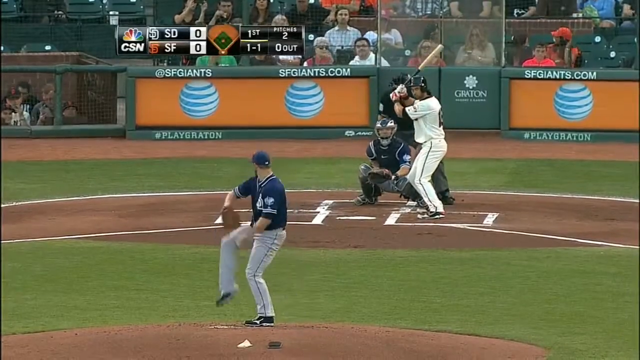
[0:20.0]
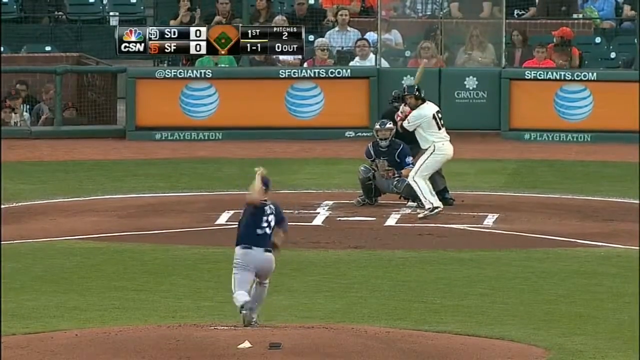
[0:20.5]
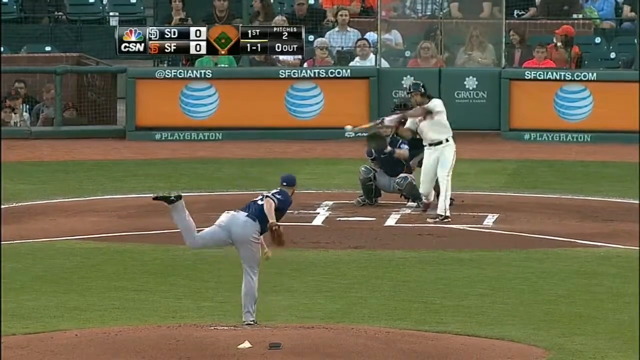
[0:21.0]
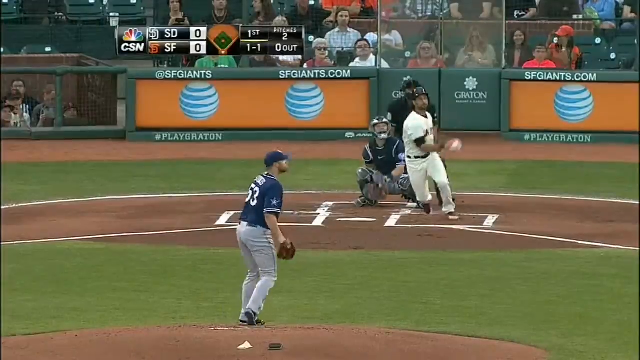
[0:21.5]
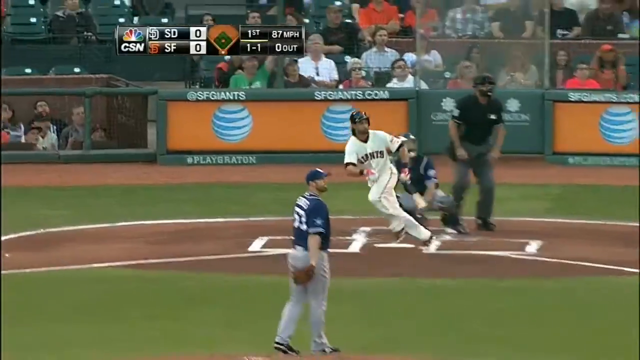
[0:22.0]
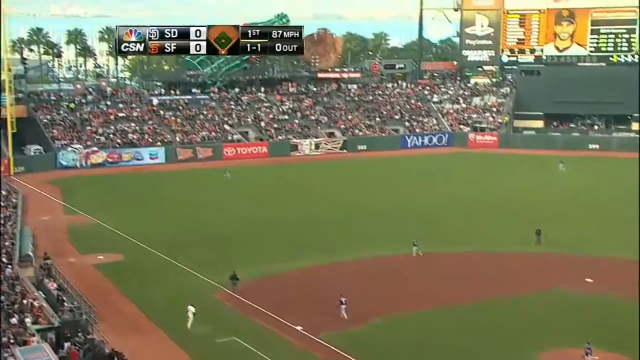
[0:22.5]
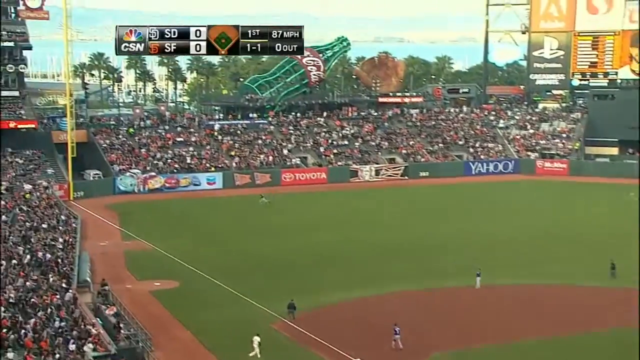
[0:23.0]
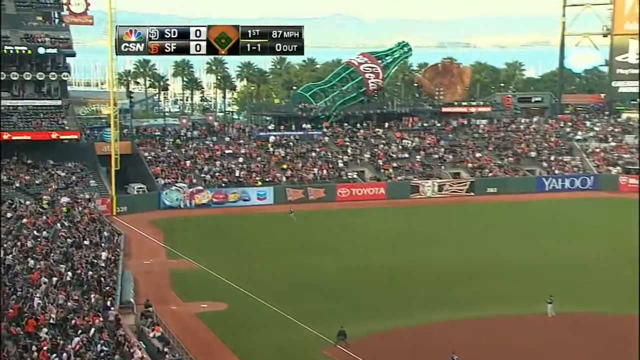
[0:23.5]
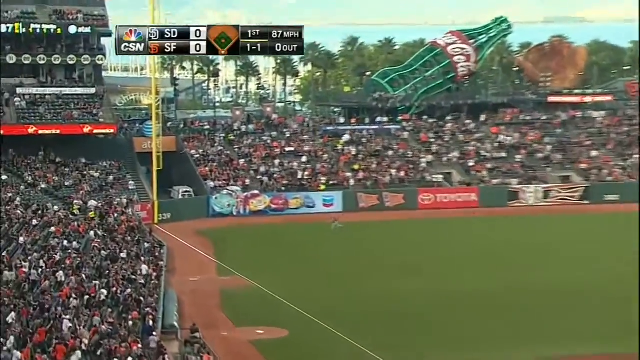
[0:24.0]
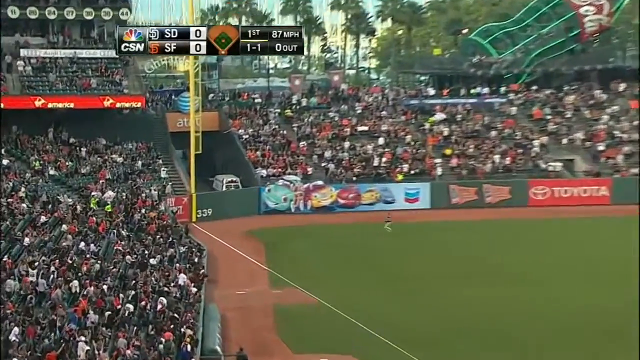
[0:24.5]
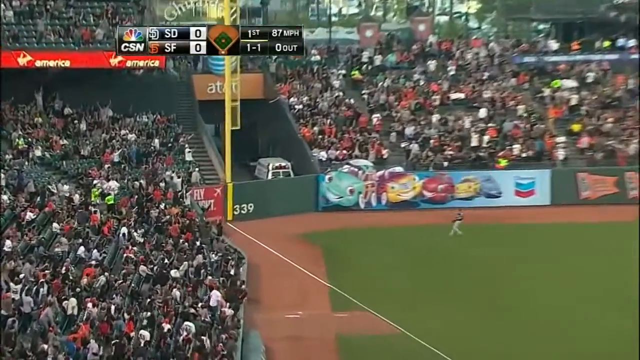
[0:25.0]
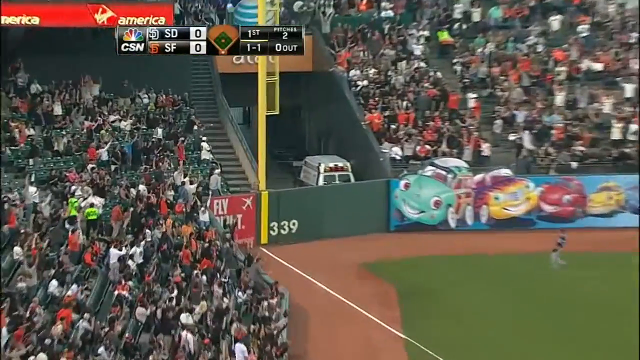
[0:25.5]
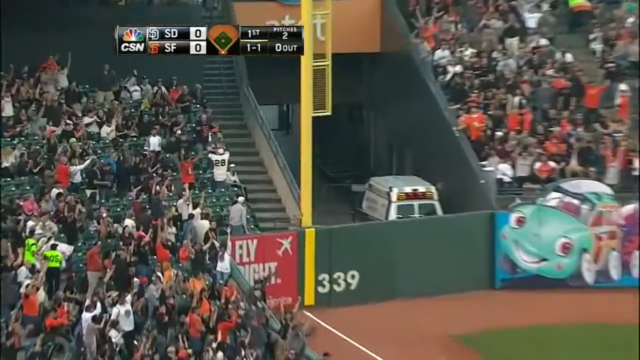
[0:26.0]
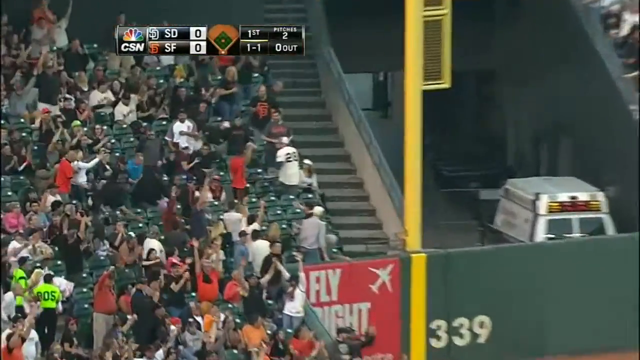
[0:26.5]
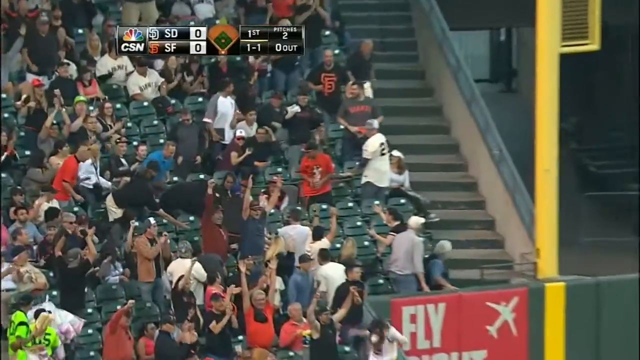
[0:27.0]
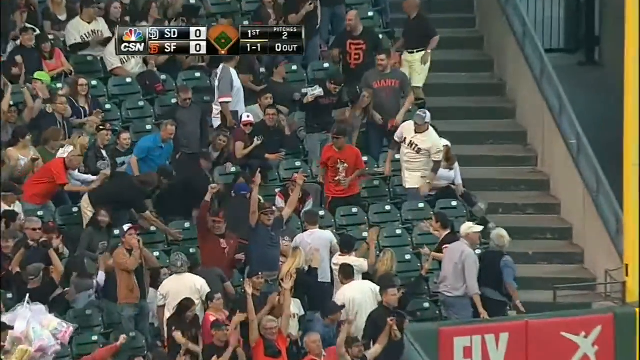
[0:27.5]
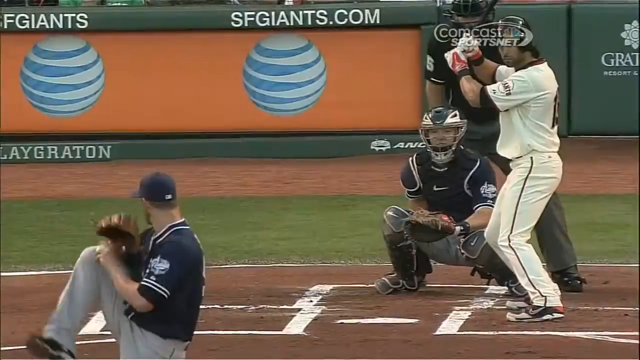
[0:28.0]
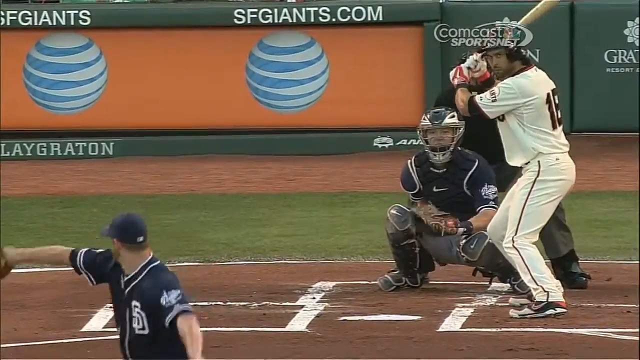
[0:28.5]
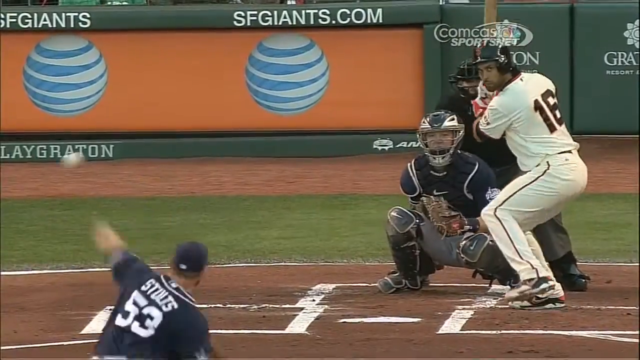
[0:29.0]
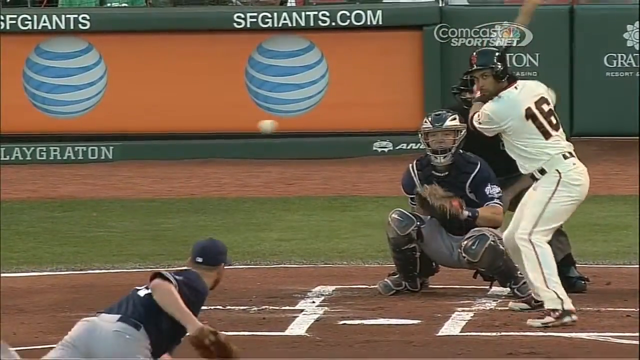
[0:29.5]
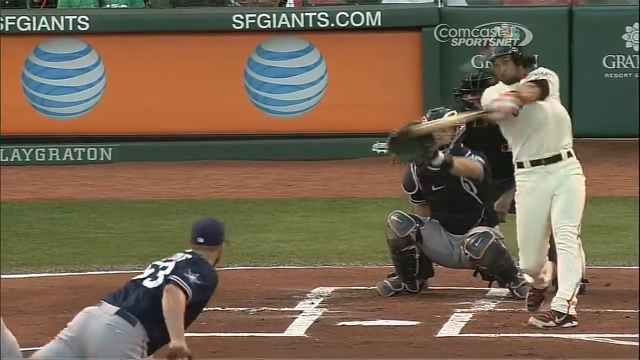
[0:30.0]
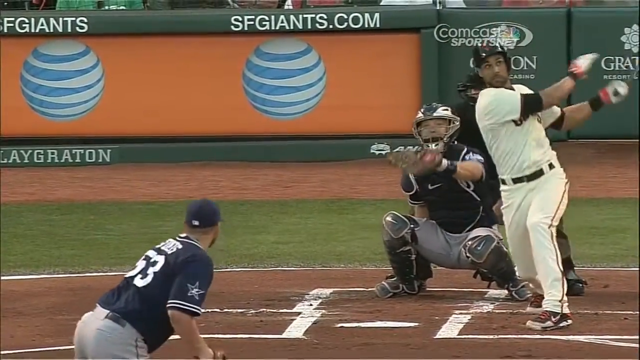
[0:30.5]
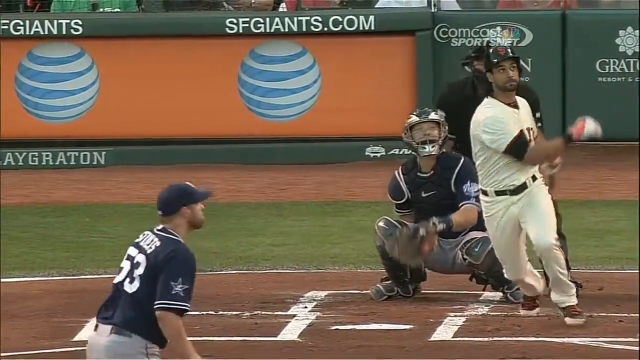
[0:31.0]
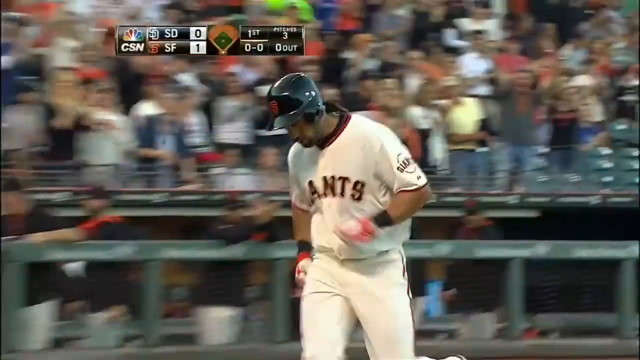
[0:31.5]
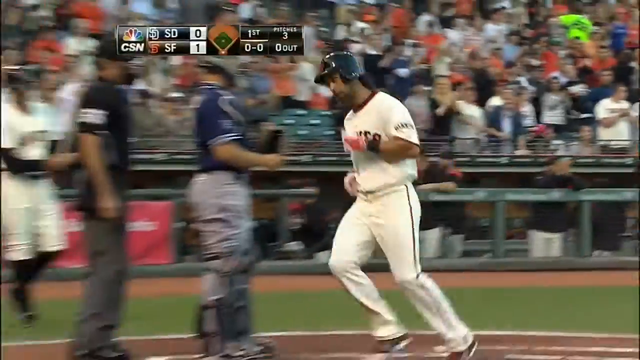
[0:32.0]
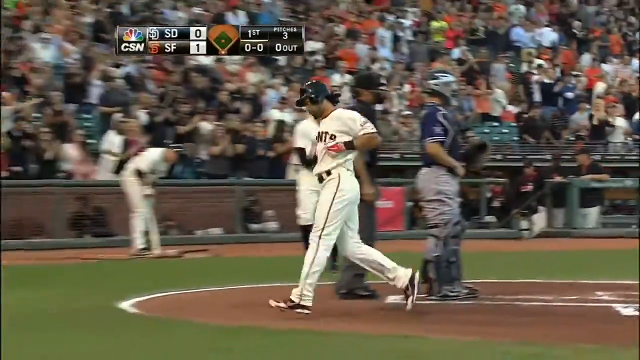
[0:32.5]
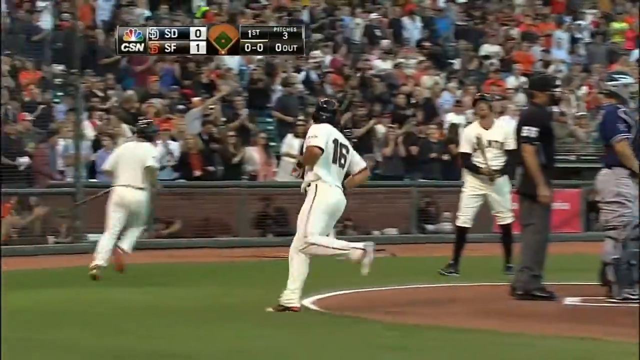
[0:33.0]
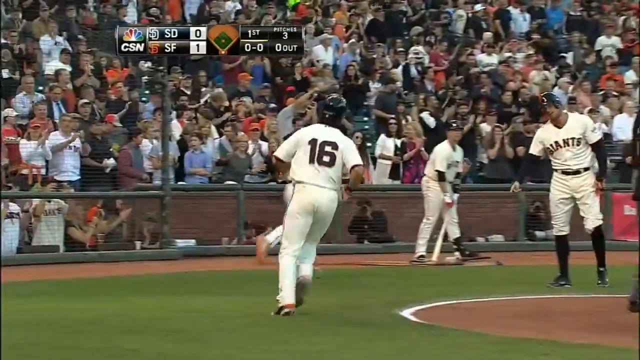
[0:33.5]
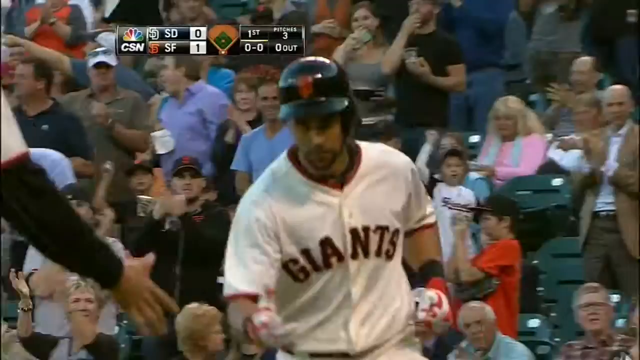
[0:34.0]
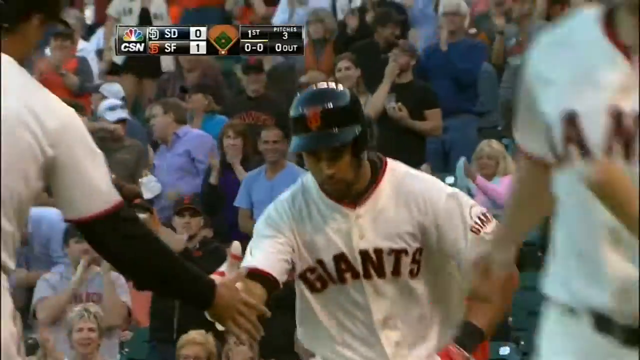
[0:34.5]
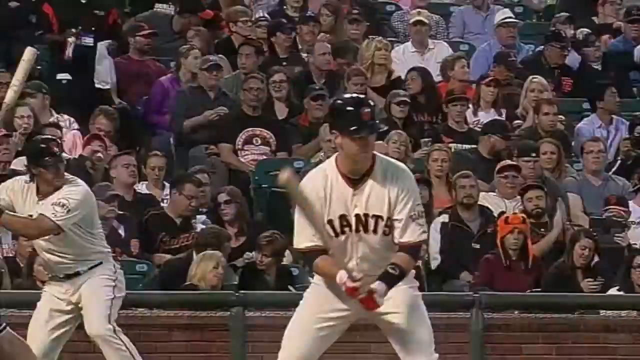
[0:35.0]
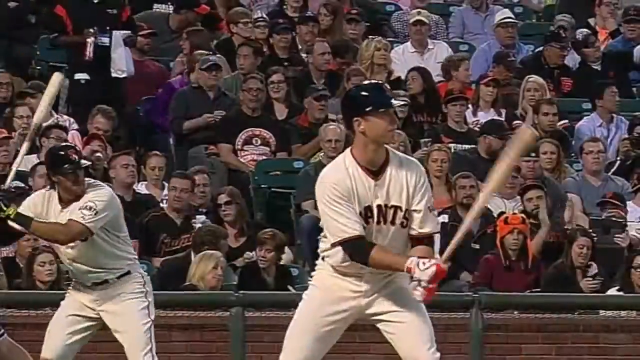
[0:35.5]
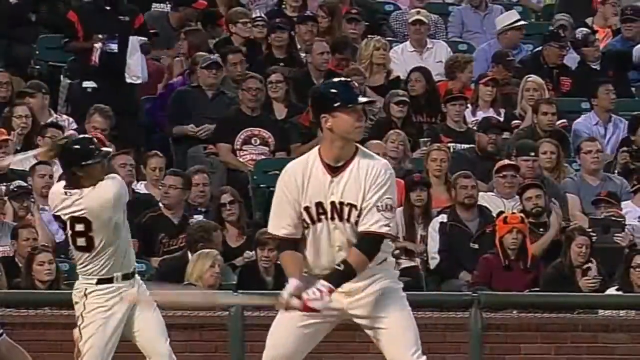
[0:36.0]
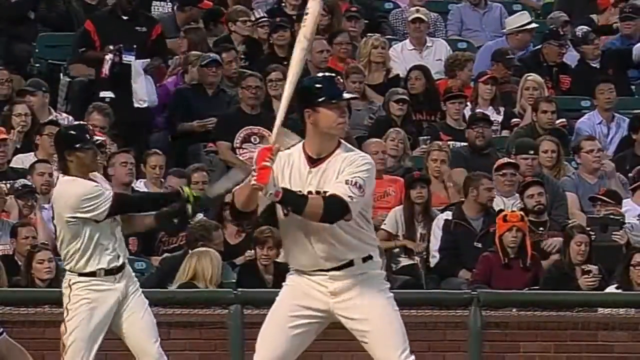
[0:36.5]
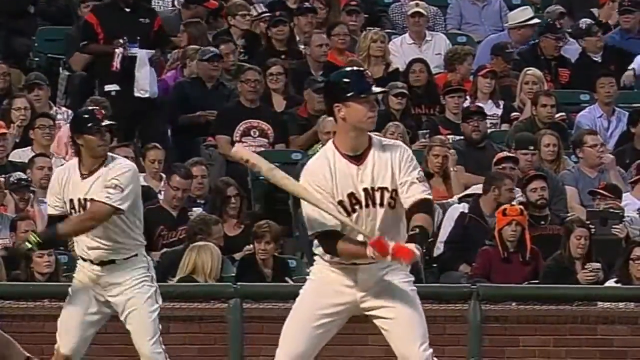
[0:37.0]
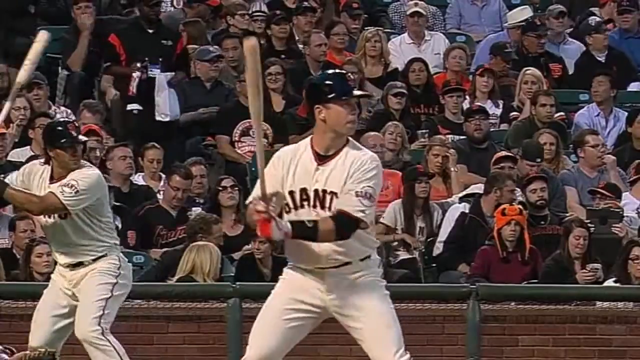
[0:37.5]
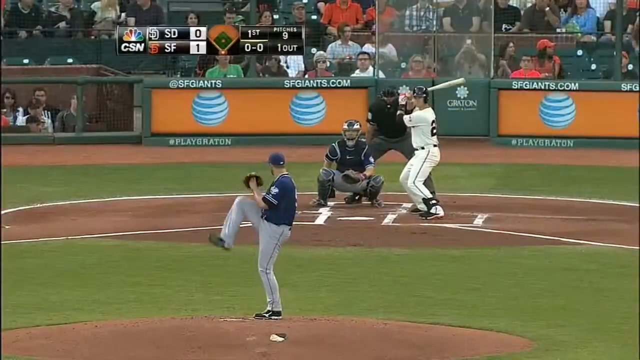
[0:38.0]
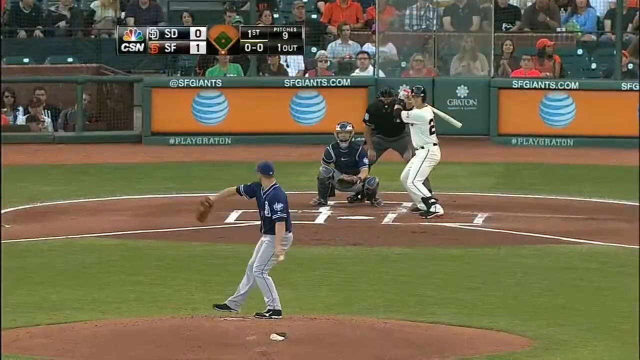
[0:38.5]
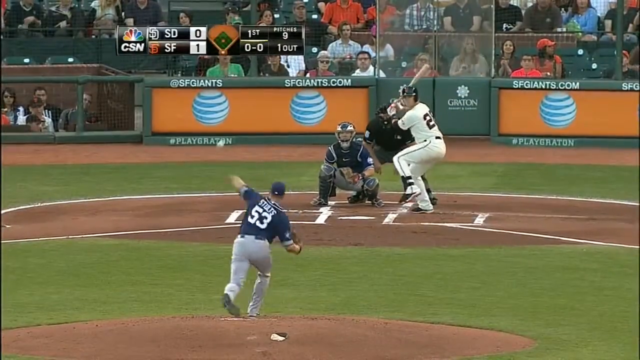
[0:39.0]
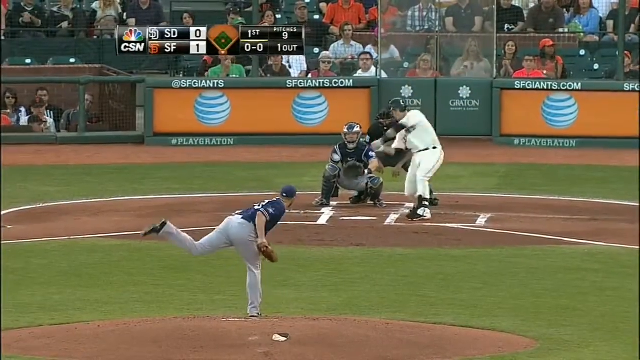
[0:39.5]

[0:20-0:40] The MLB game pits the visiting San Diego Padres against the home team, the San Francisco Giants. It is the bottom of the first with one ball, one strike, no outs, and the score 0-0. The left-handed pitcher pitches to the right-handed batter, Giants number 16, who hits a line-drive home run right down the left field line at about 339 feet.